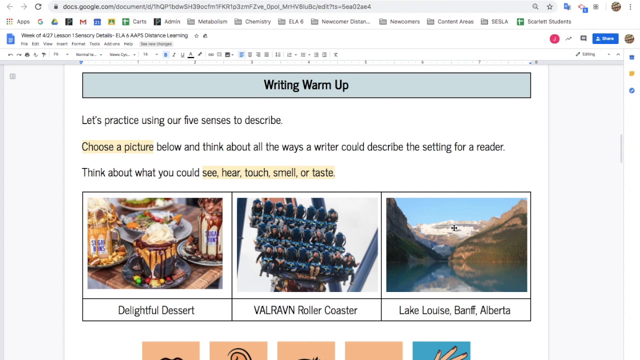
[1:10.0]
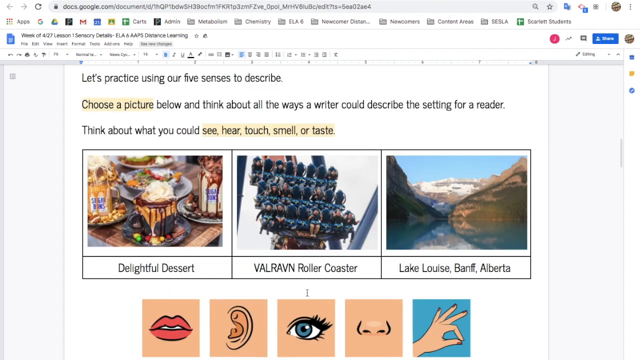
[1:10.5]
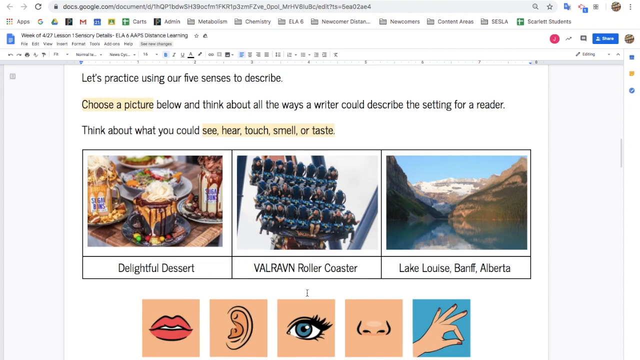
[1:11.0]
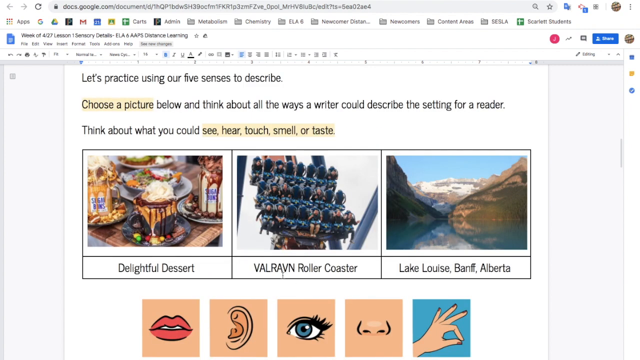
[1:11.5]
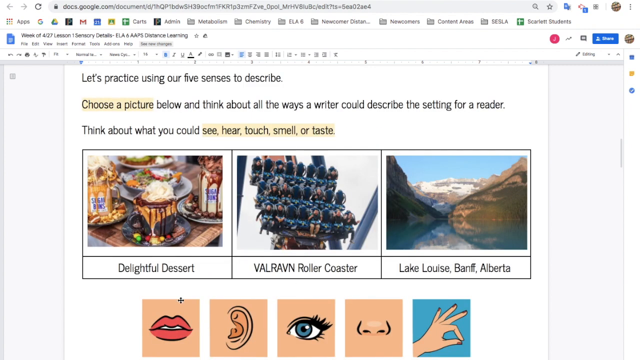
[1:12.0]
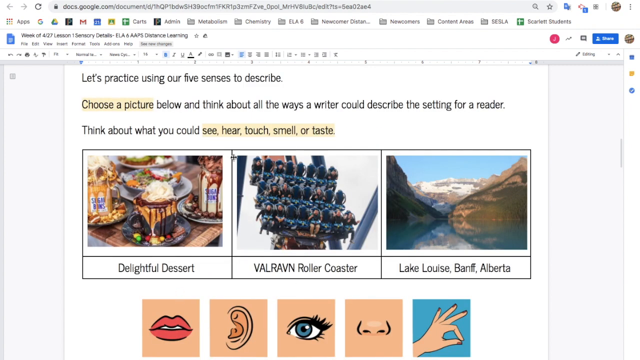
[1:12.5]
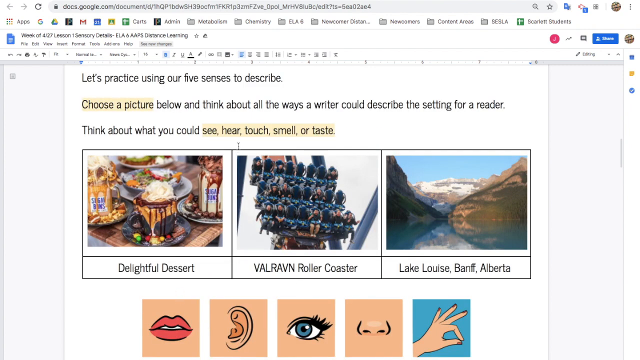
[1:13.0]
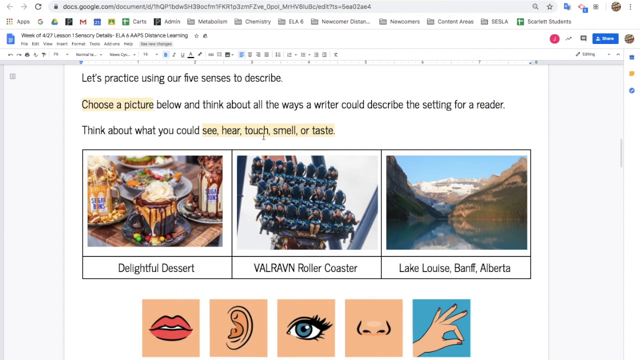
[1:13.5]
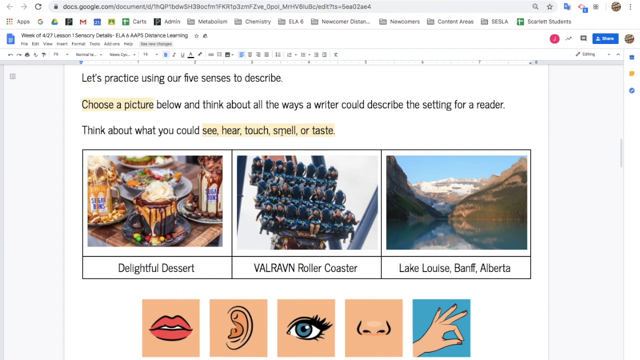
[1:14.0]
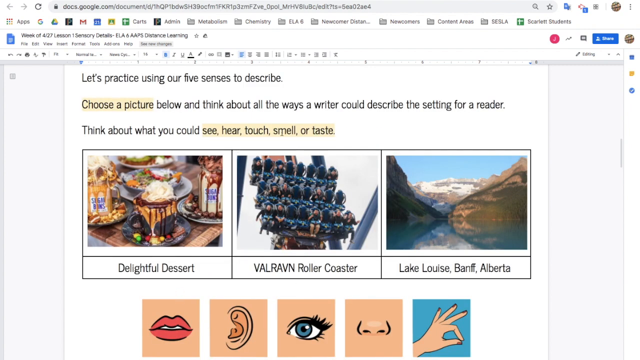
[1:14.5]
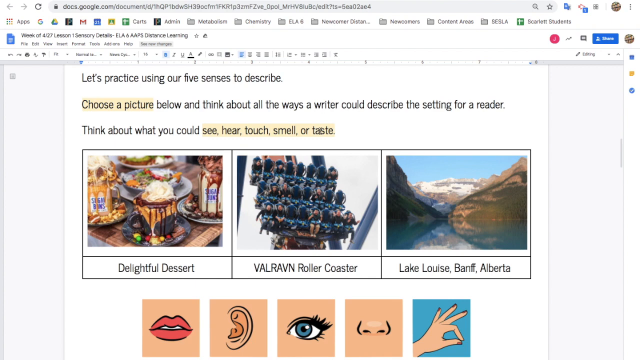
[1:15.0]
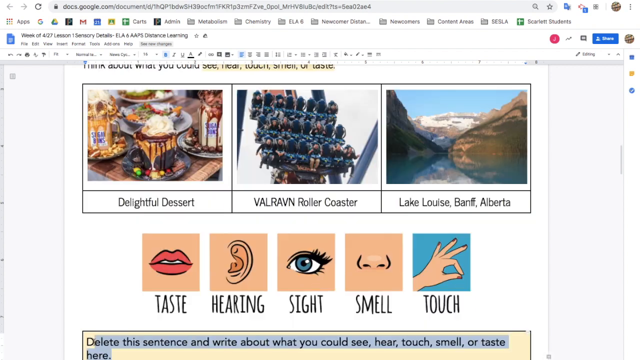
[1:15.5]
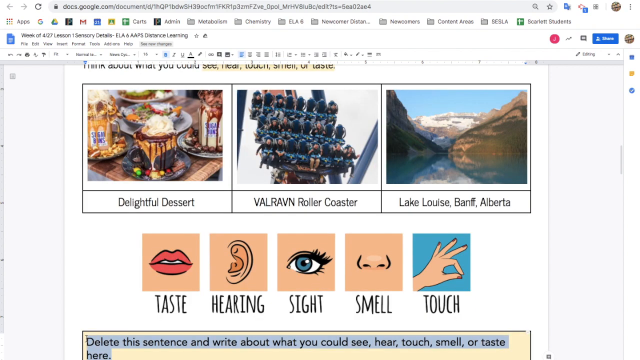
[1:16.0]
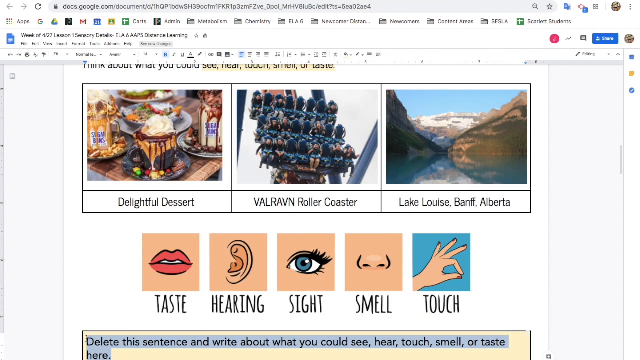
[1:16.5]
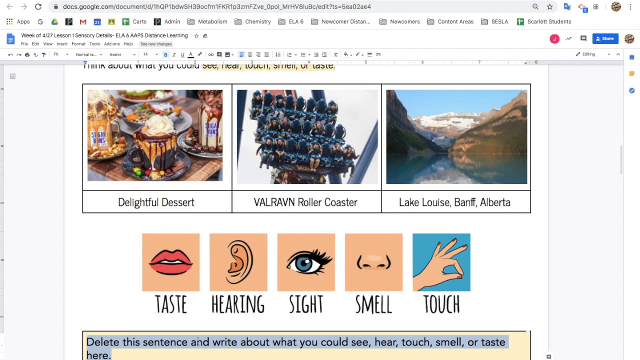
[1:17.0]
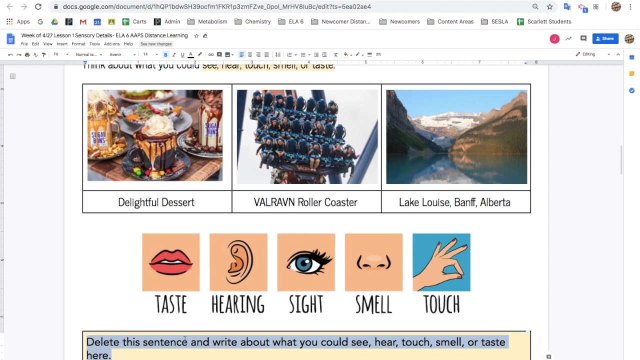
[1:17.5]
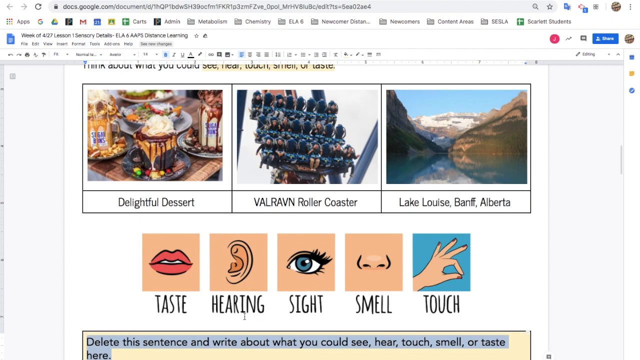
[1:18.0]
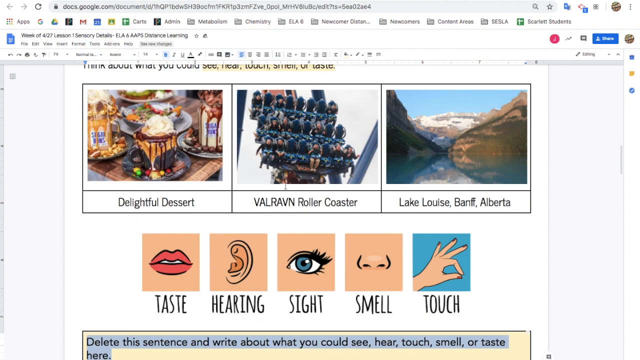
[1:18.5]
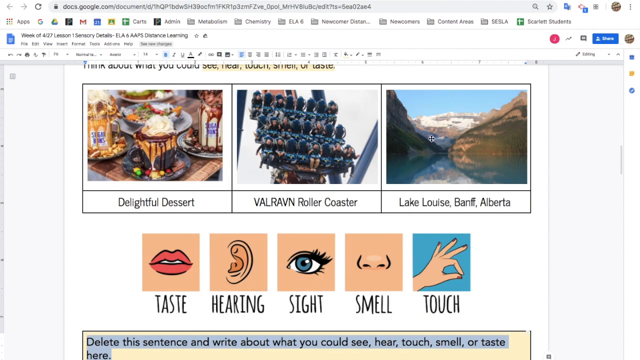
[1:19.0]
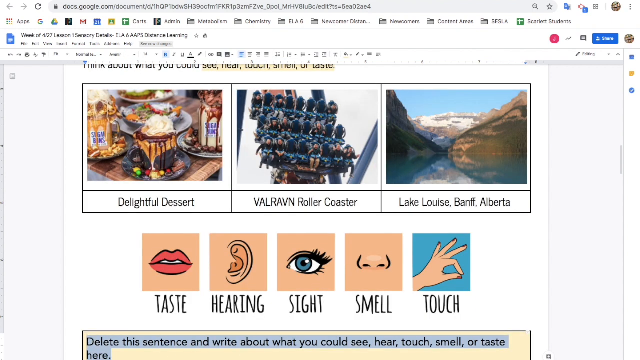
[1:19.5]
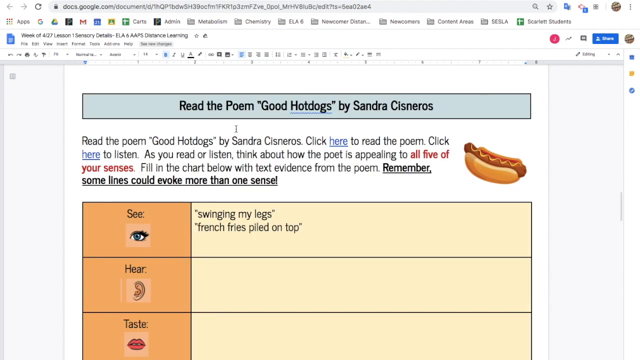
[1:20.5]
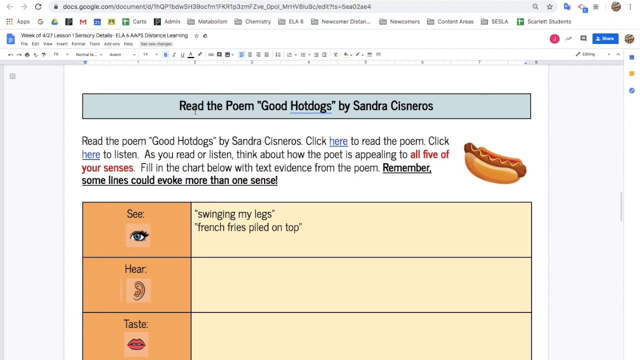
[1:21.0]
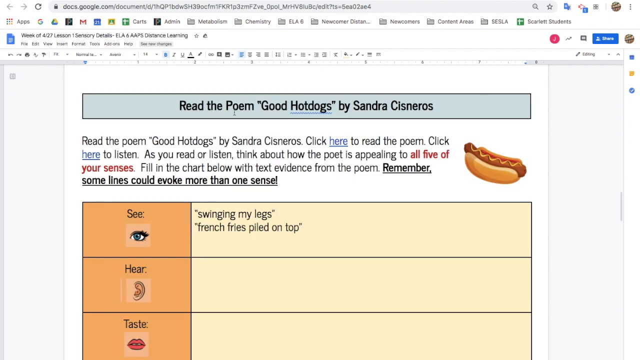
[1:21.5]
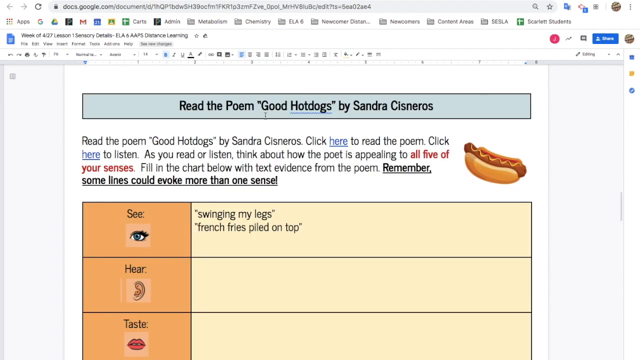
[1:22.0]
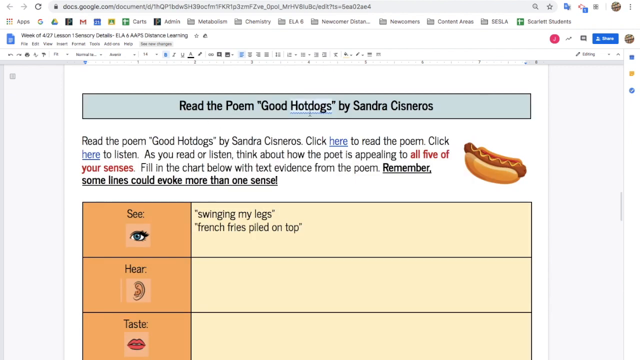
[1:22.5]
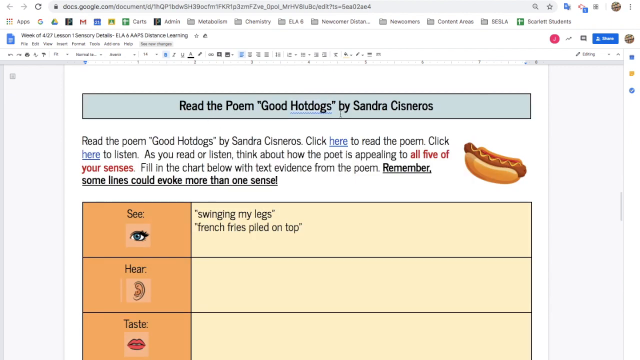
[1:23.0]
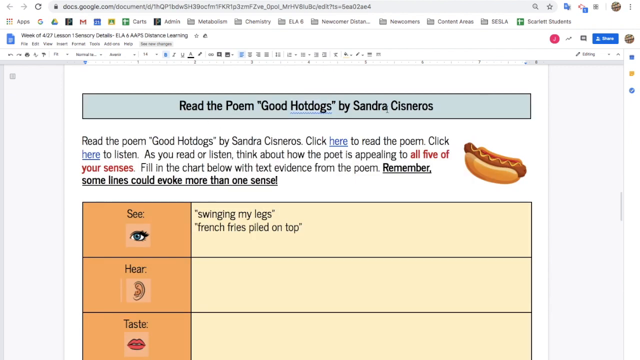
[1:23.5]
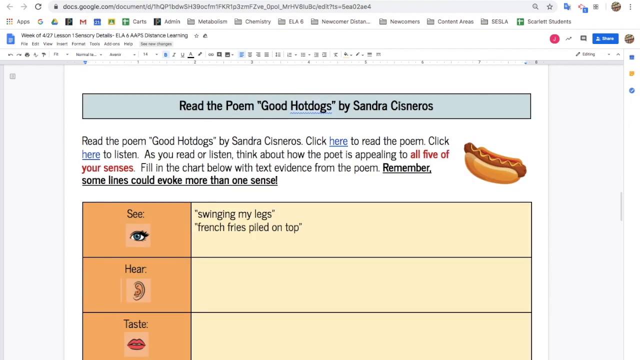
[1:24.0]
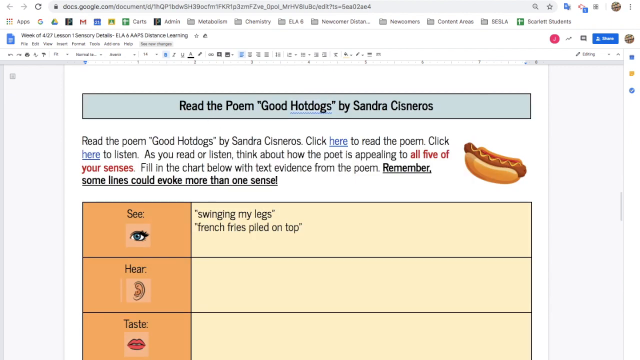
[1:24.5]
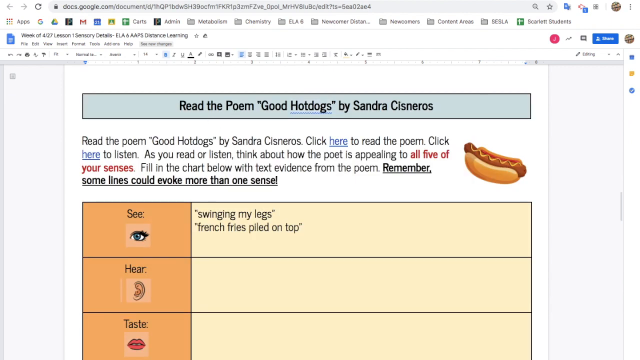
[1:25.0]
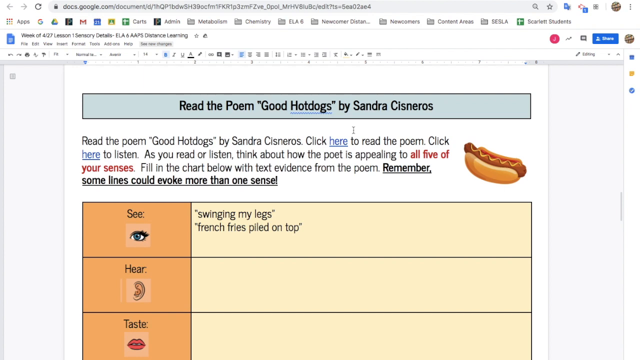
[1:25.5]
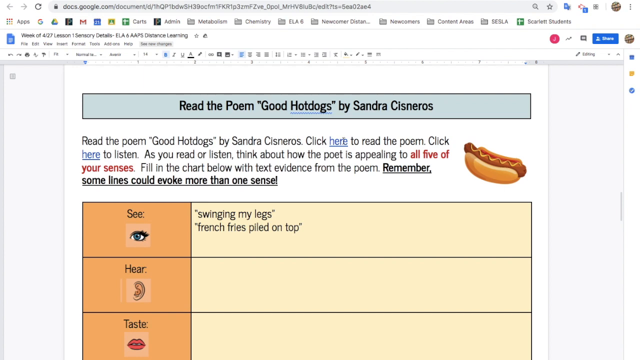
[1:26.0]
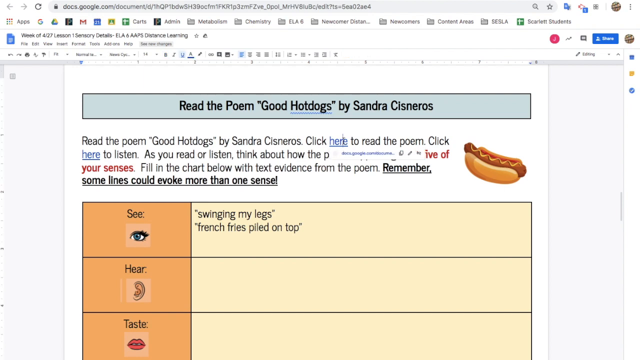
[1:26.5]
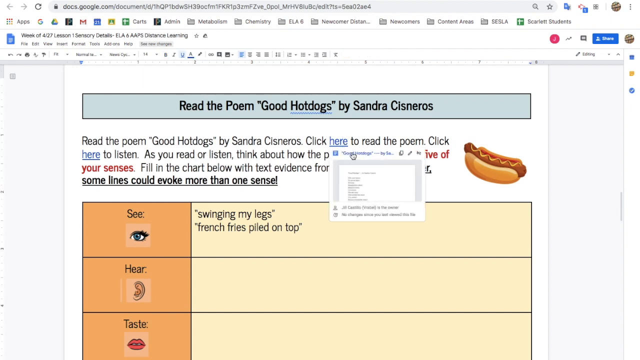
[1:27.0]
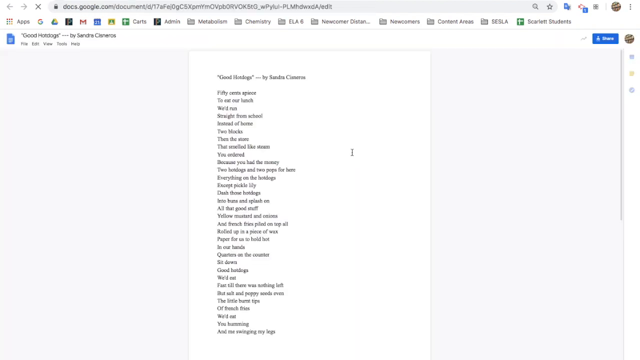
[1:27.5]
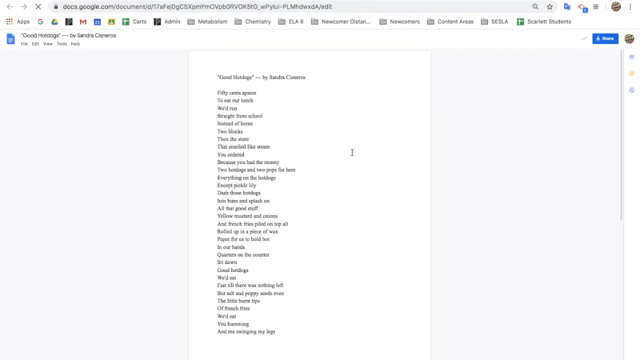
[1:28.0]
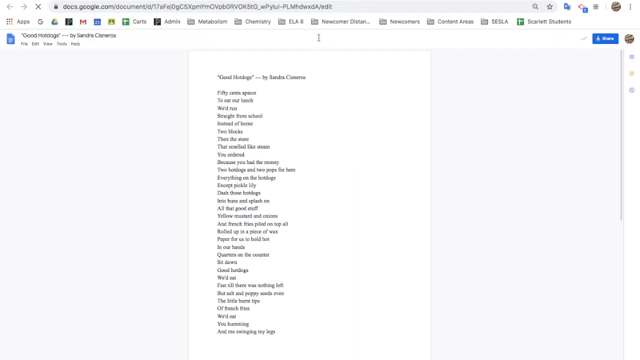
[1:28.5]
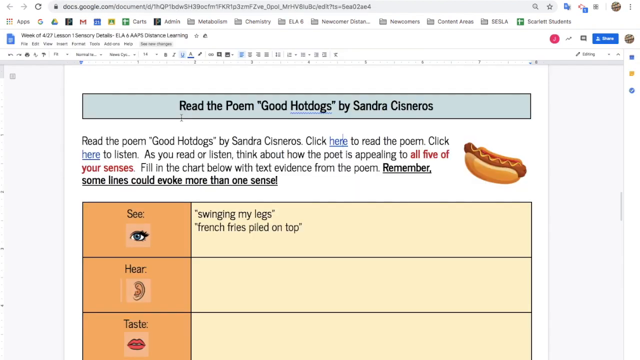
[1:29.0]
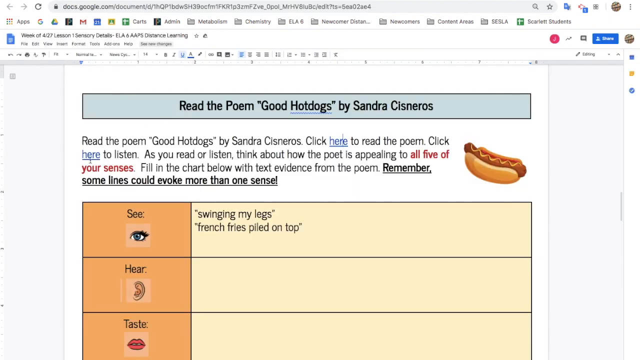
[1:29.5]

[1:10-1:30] The writing warm-up screen continues, showing three different pictures: a delightful dessert, a Bavarian roller coaster, and Lake Louise, Banff, Alberta. The screen then says "read the poem, Good Hot Dogs by Sandra Cisneros. Click here to read the poem. Click here to listen. As you read or listen, think about how the poem is appealing to all five of your senses. Fill in the chart below with text evidence from the poem. Remember, some lines could evoke more than one sense." Under the "see" section of the five senses for the poem is the text "Swinging my legs, french fries piled on." The view then transitions to a text list of kind of words or strategies, and then kind of goes back to the poem screen.